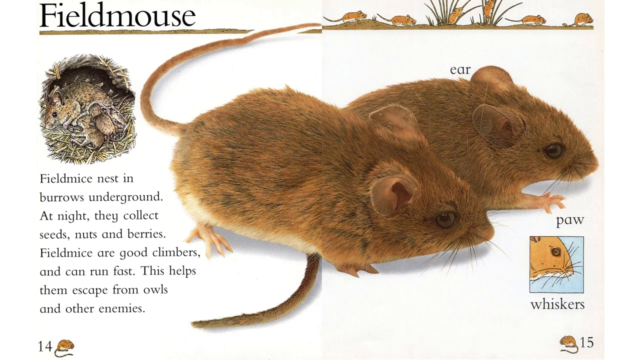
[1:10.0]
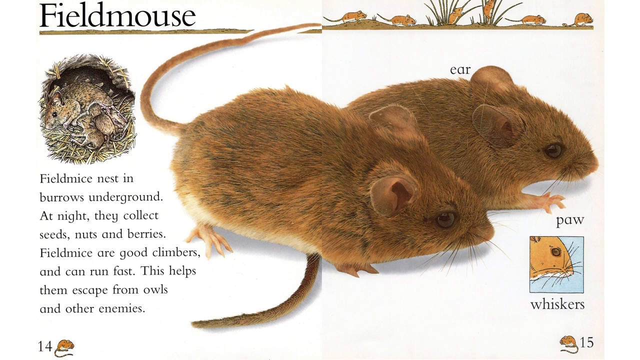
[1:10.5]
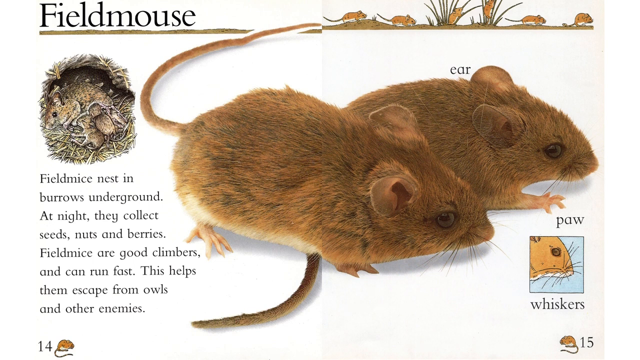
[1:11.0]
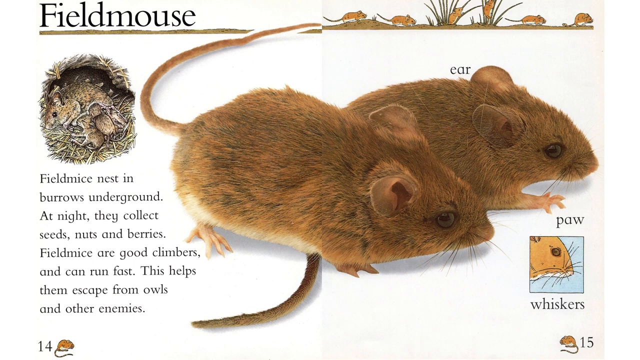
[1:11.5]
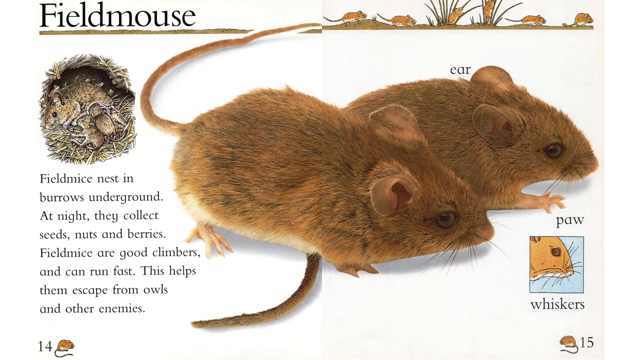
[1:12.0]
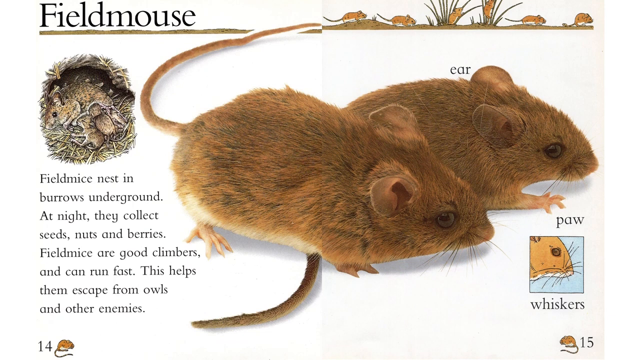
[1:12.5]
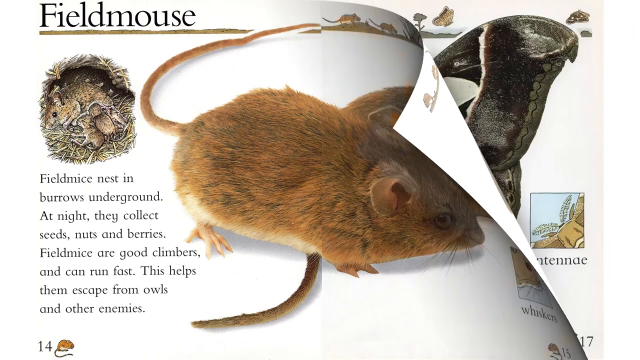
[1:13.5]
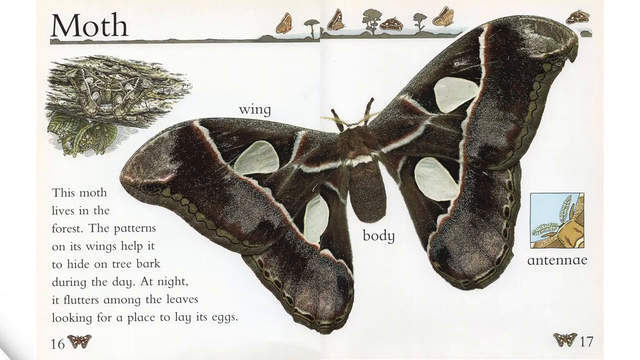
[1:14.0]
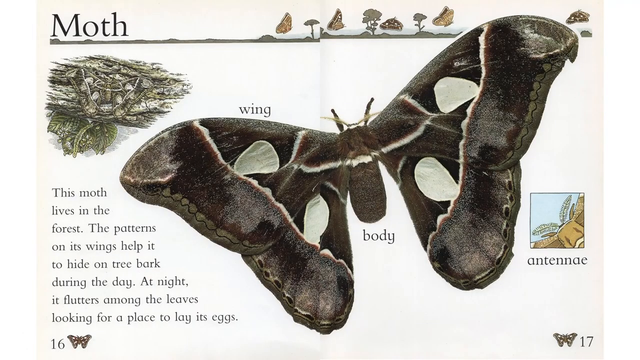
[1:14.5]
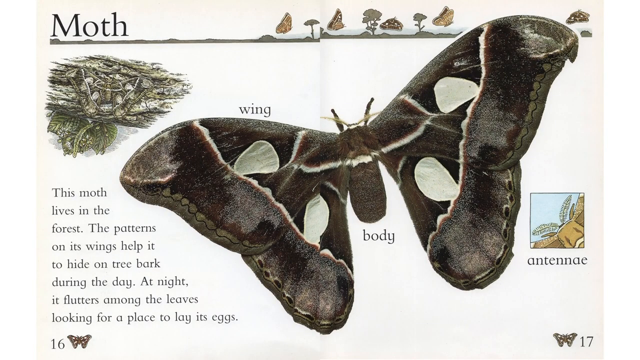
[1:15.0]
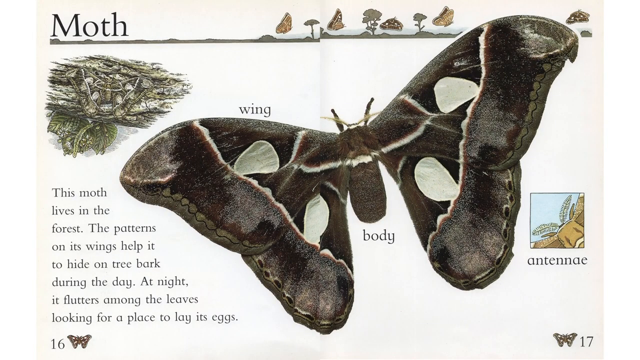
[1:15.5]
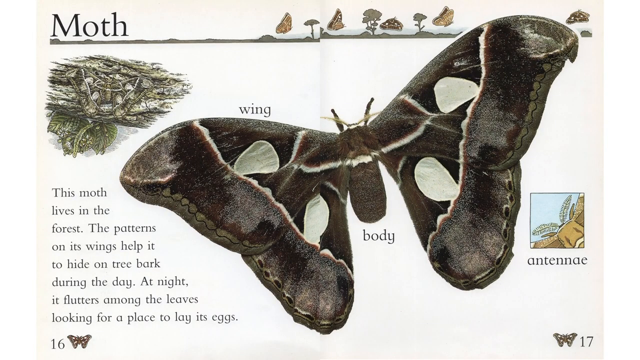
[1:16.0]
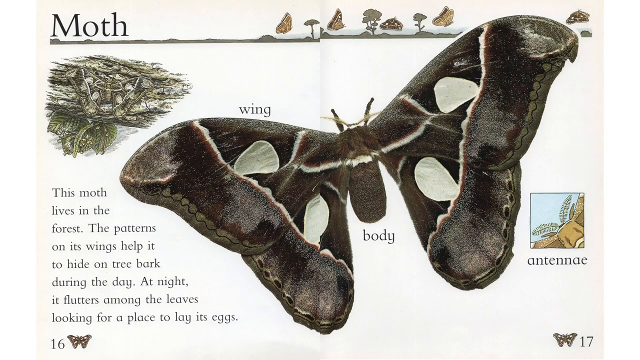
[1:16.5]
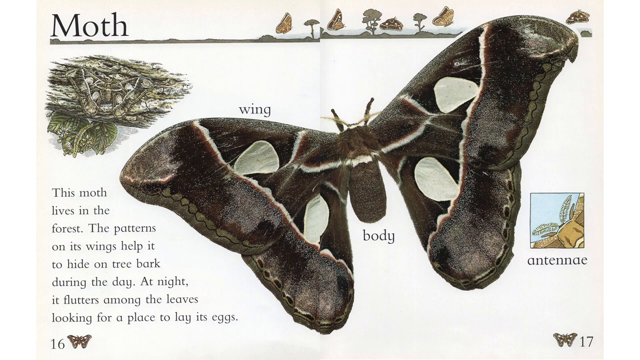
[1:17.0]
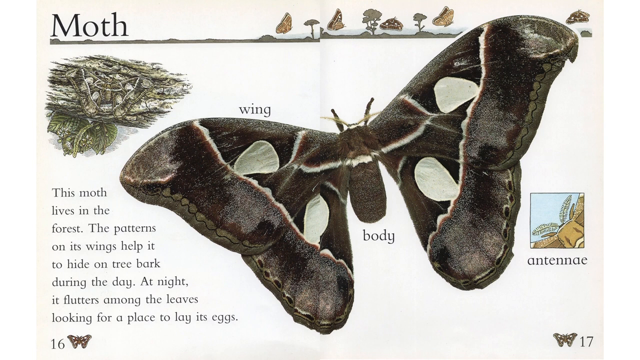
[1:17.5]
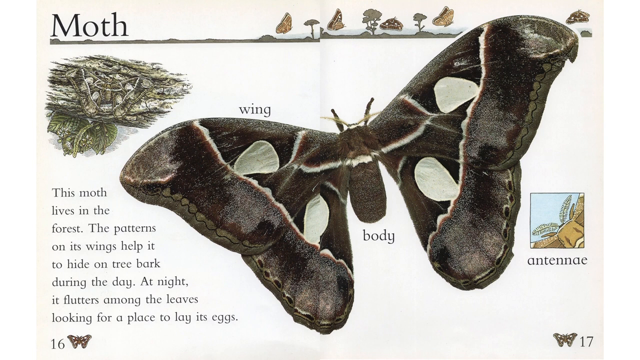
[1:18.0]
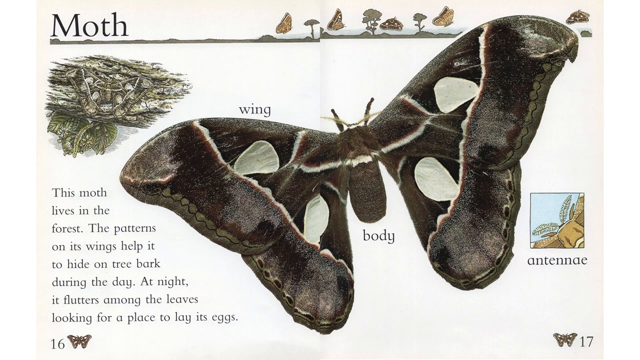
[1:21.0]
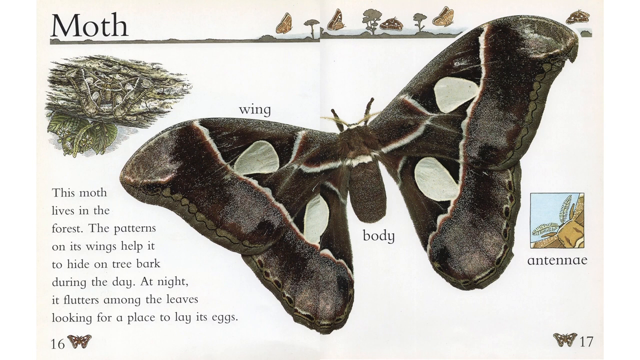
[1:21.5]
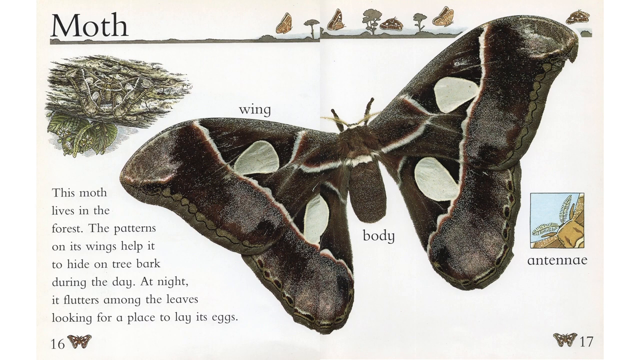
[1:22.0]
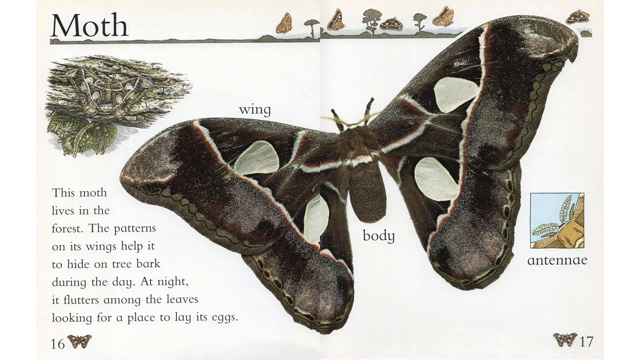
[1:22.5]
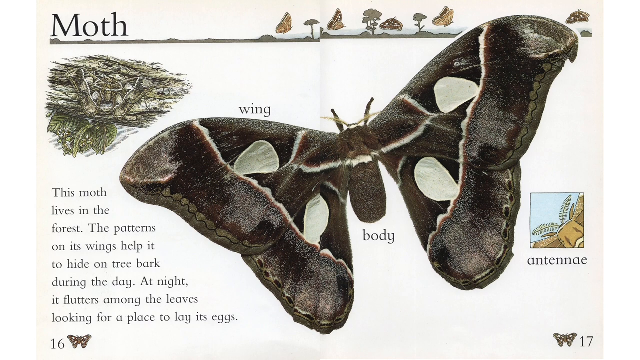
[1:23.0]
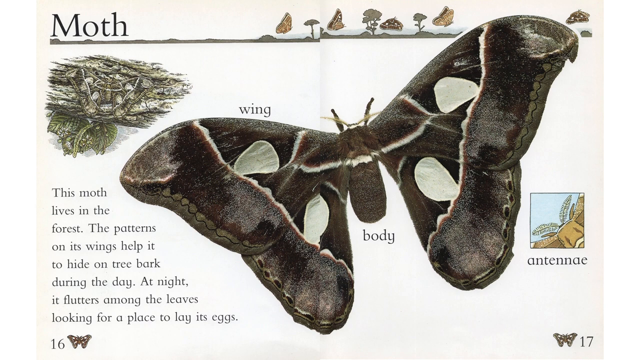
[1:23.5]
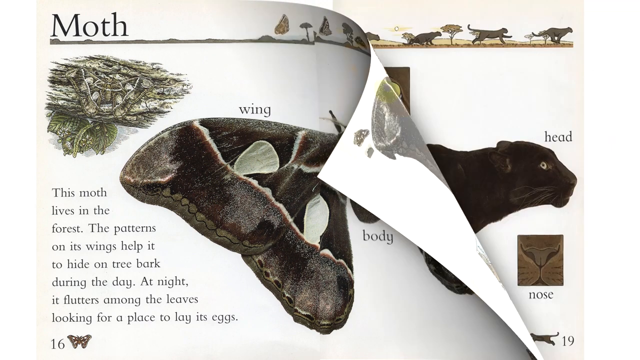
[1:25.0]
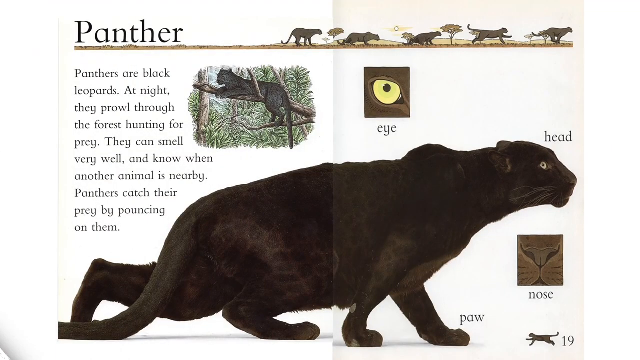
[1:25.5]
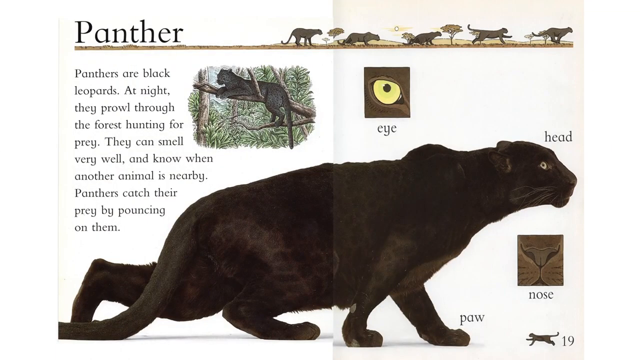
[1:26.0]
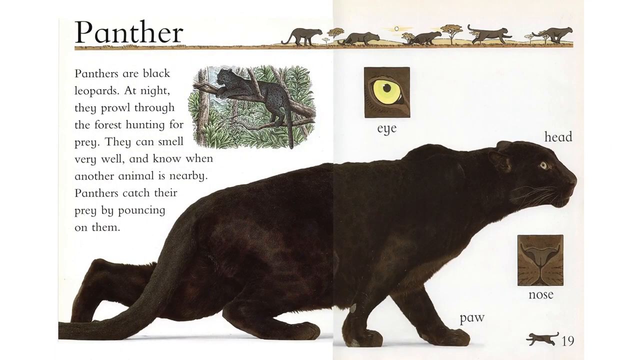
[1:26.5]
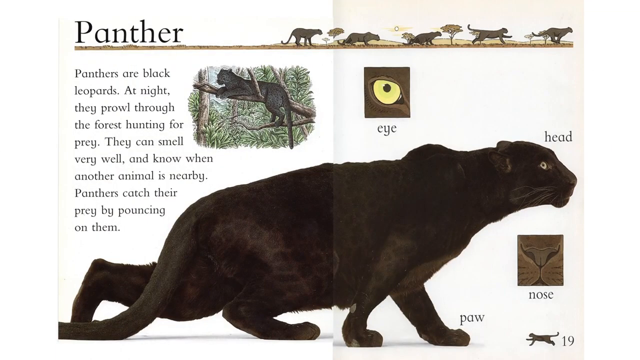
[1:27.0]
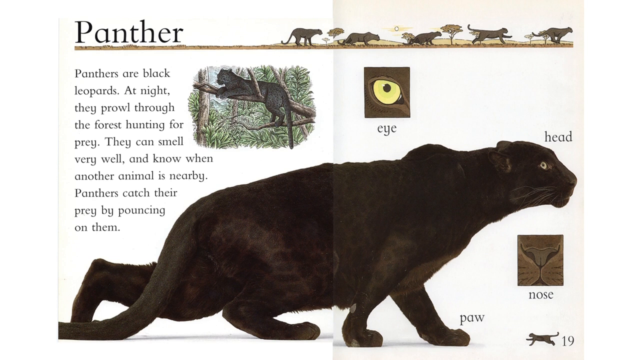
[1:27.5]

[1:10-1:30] The field mouse page labels the ears, the paw and the whiskers around the mouth. There are two pictures of field mice and a drawing of a mother and children in what looks like a nest. The text reads "Field mice nest in burrows underground. At night, they collect seeds, nuts, and berries. Field mice are good climbers and can run fast. This helps them escape from owls and their enemies." A moth follows, with labels showing its wings and body. The text reads "This moth lives in the forest. The patterns on its wings help it hide on the tree bark during the day. At night, it flutters amongst the leaves, looking for a place to lay its eggs."